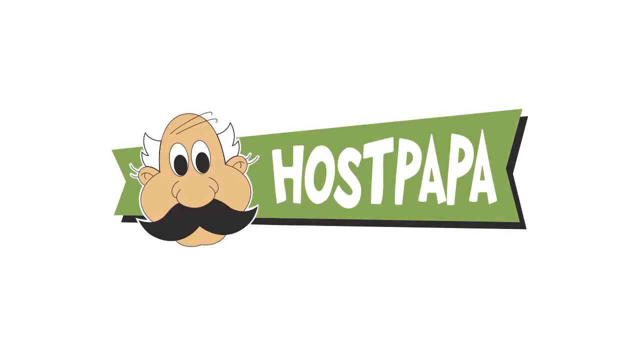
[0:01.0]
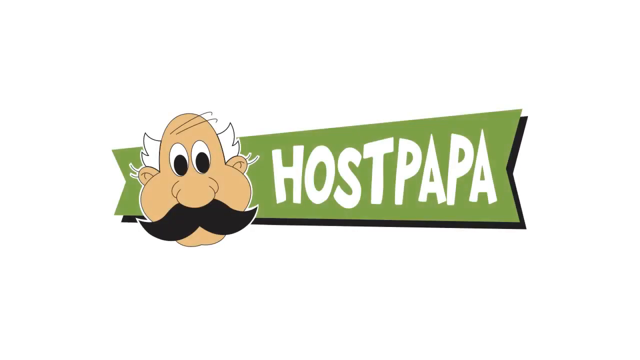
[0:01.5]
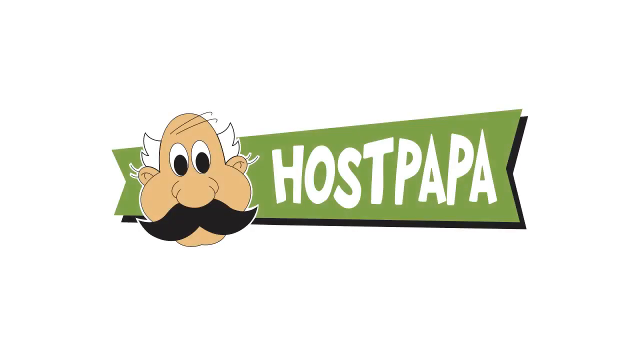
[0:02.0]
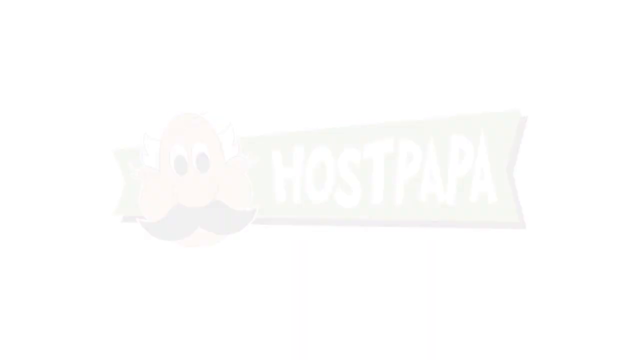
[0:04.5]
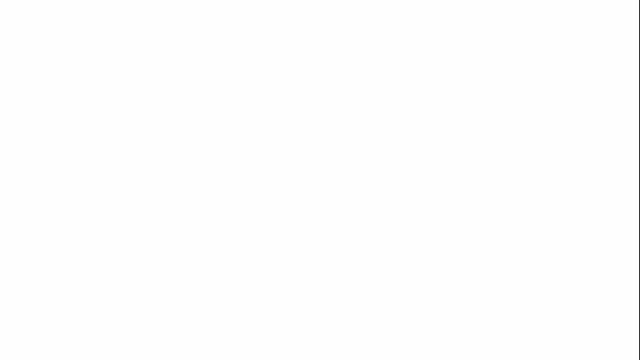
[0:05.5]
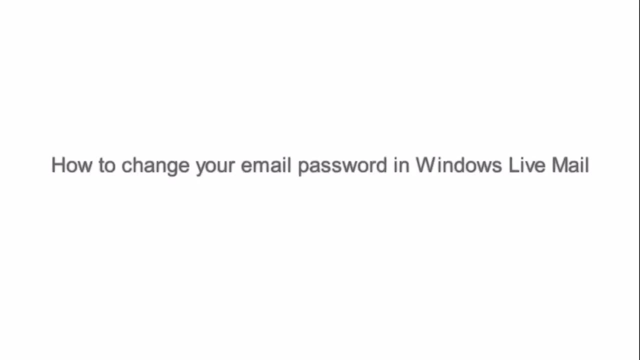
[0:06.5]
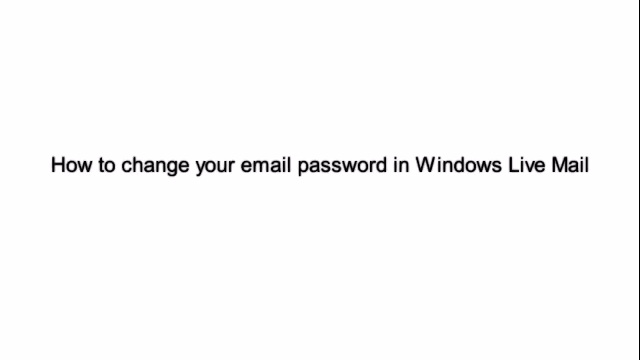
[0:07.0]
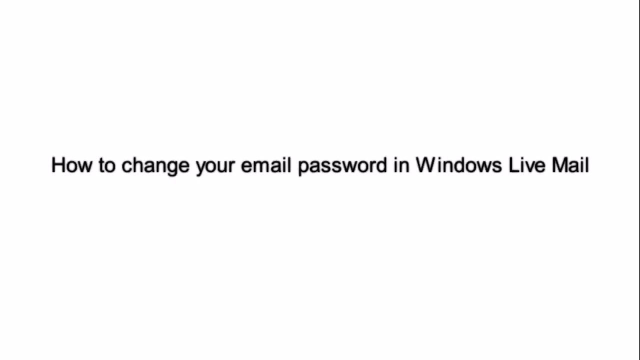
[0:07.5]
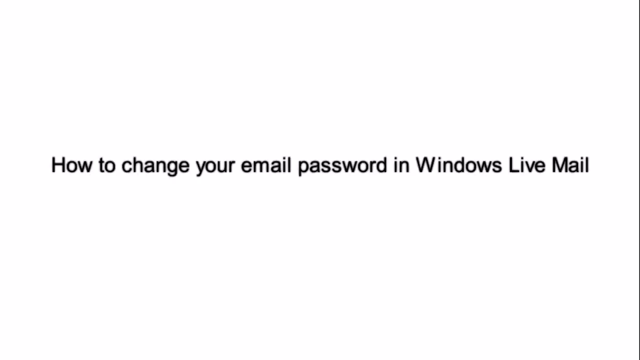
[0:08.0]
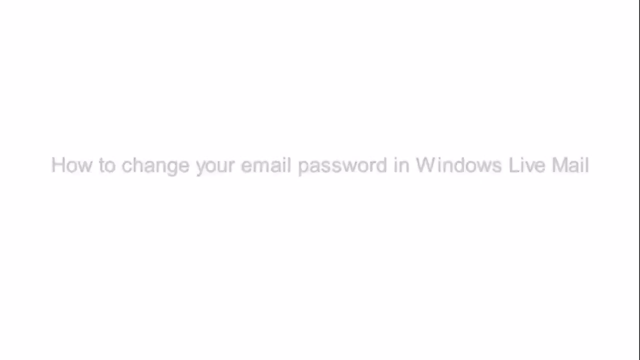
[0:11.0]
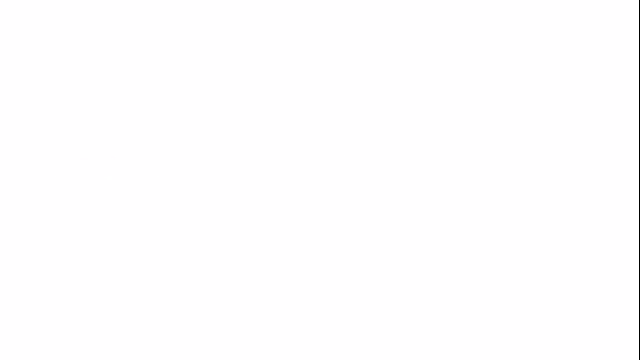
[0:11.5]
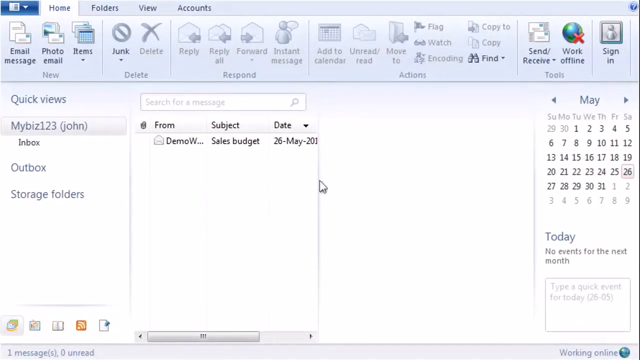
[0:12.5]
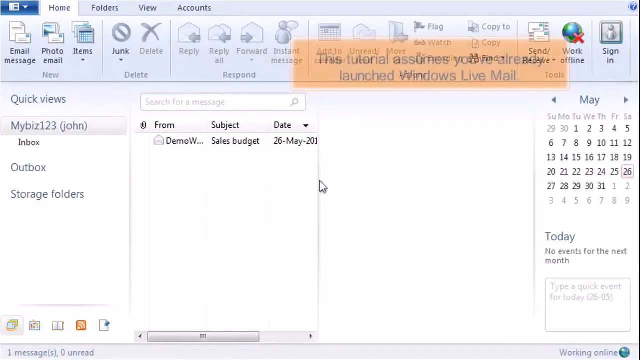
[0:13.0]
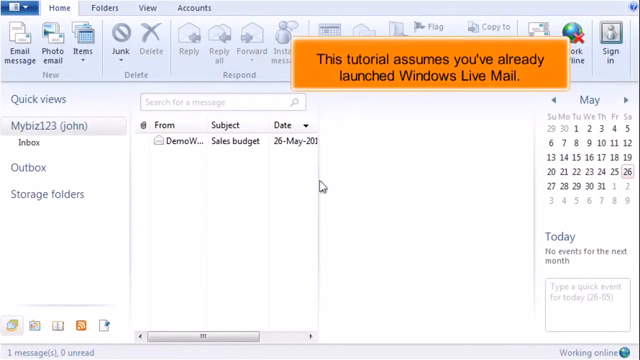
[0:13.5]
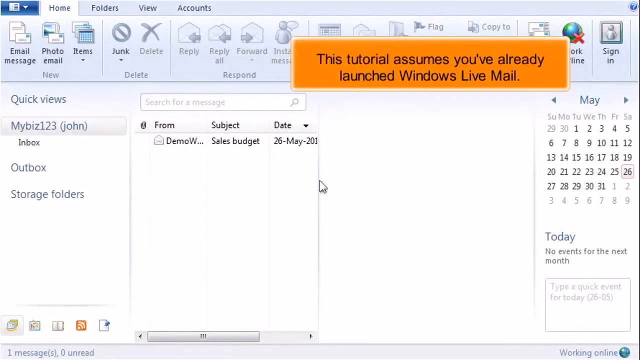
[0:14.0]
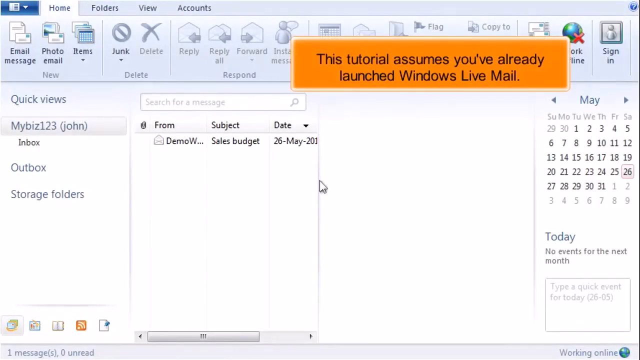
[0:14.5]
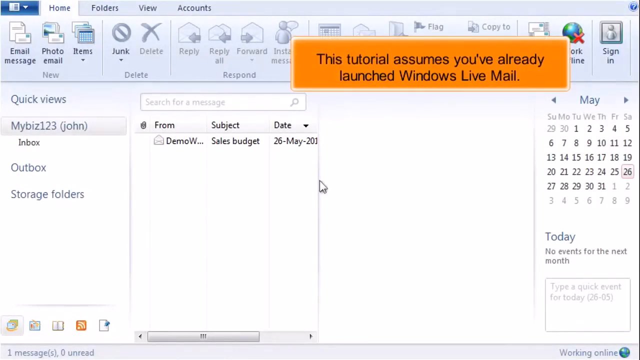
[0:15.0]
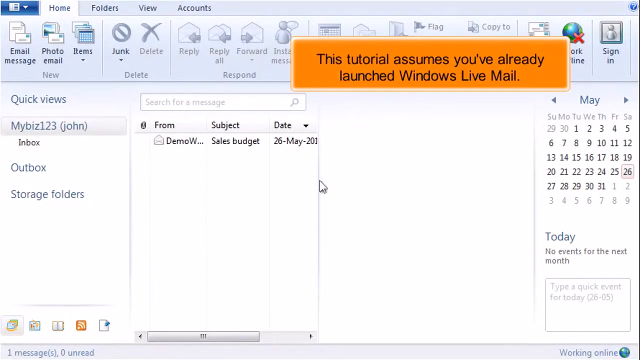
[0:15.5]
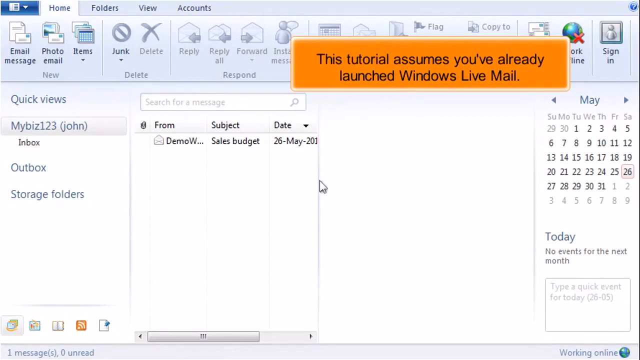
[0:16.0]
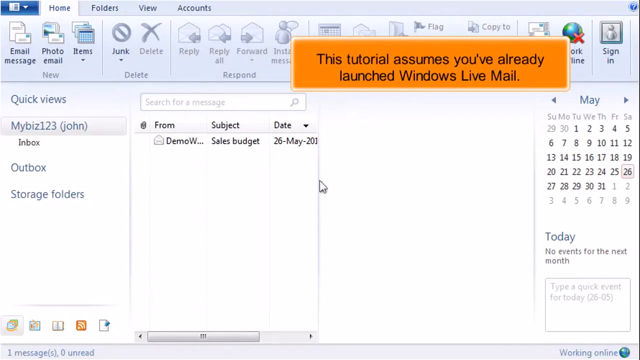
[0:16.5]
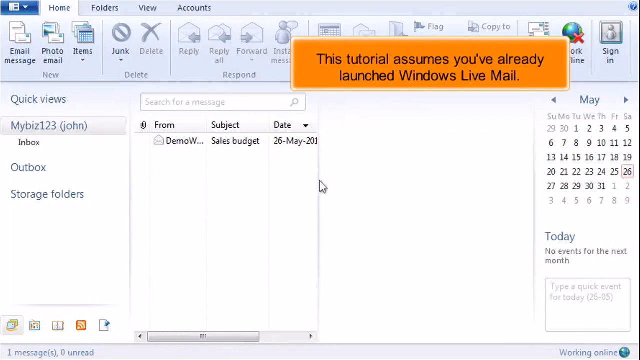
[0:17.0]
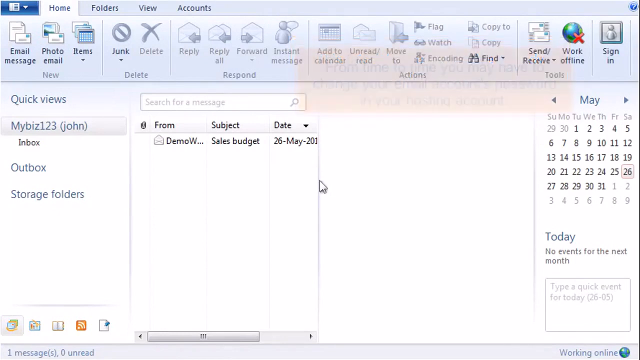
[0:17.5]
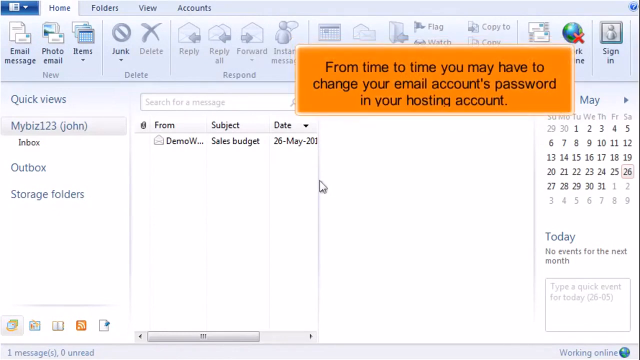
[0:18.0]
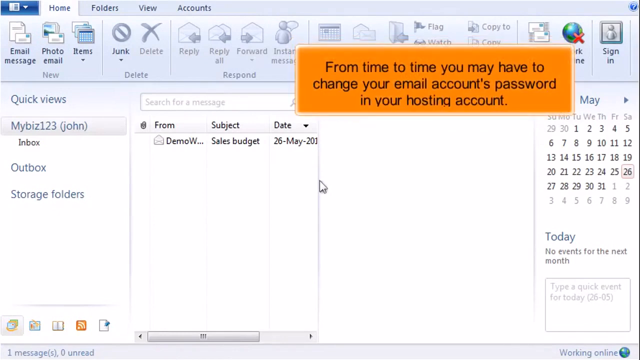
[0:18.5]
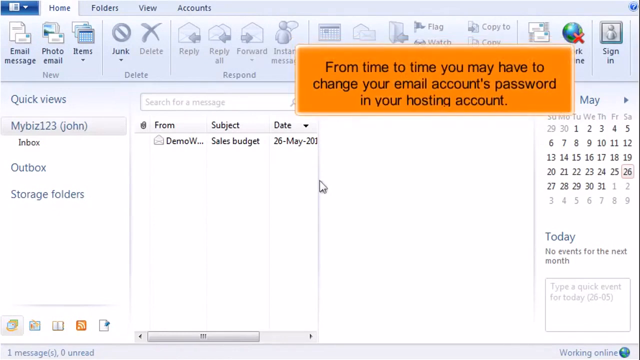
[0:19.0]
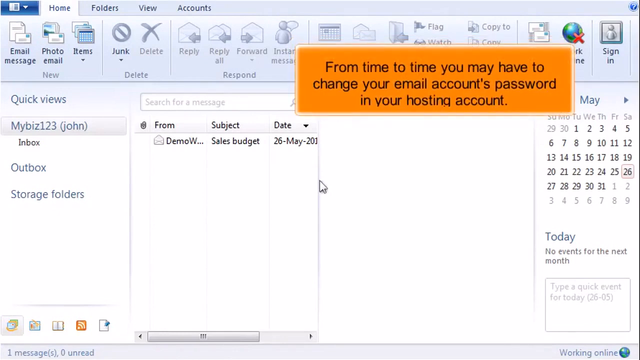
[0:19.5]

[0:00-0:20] This is a tutorial video hosted by Hostpapa. It shows that the user is already logged in to Windows Live email, with a screen of emails and the other tabs of the email program visible. It also shows that the user is already on the host account page. The welcome page is white, with not much color.